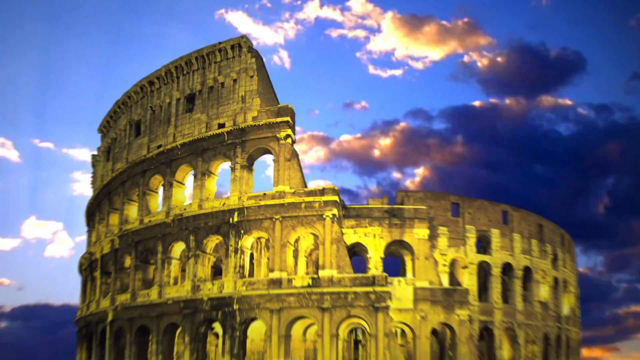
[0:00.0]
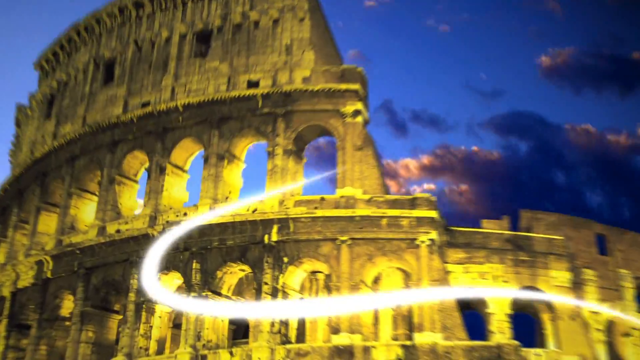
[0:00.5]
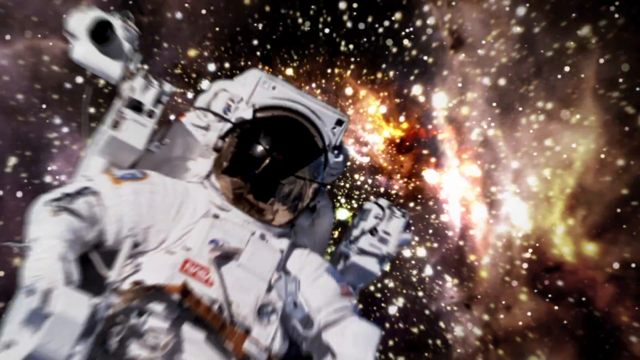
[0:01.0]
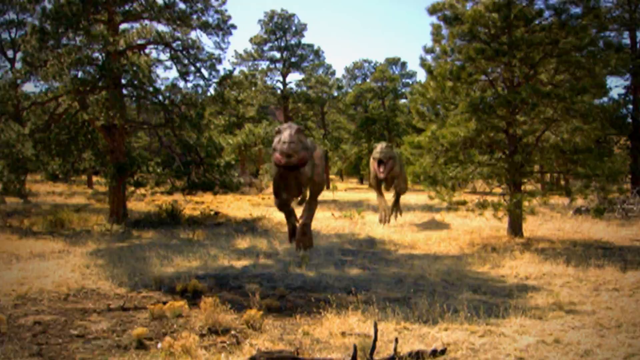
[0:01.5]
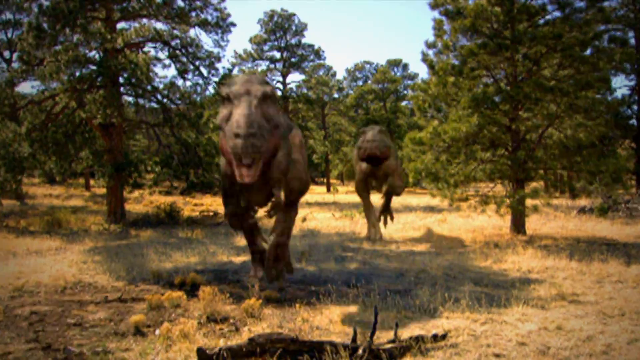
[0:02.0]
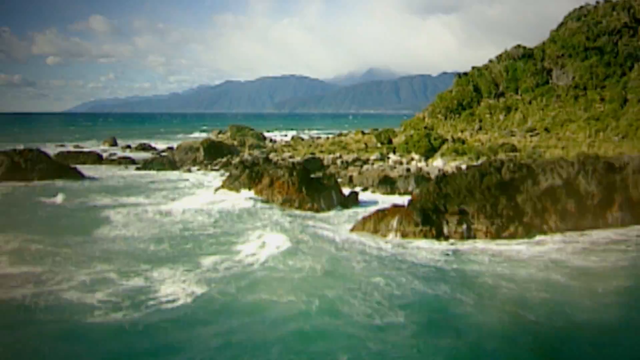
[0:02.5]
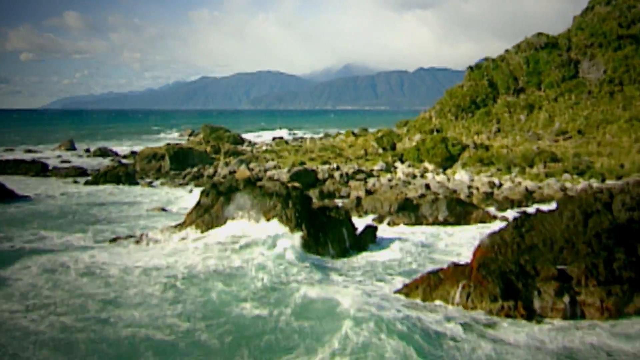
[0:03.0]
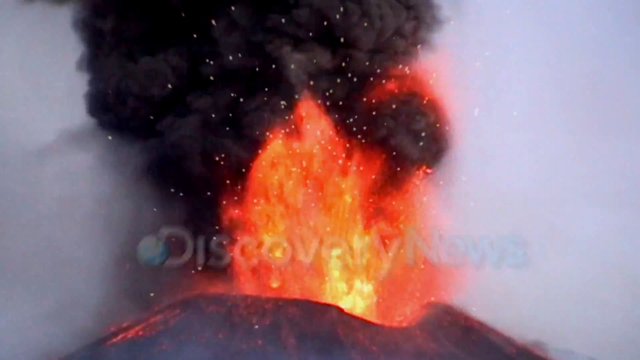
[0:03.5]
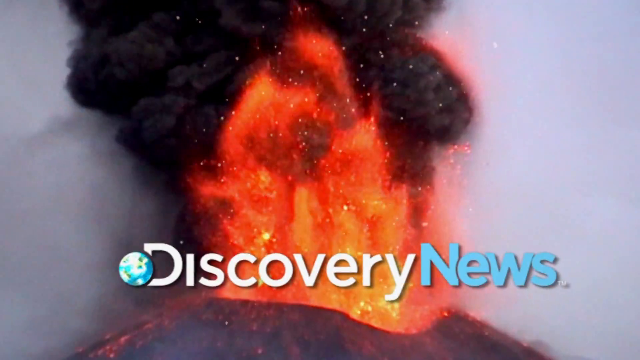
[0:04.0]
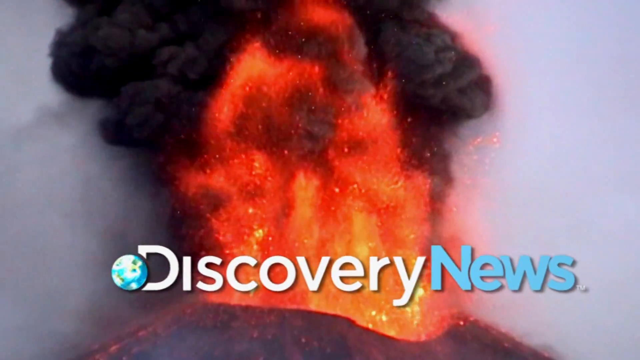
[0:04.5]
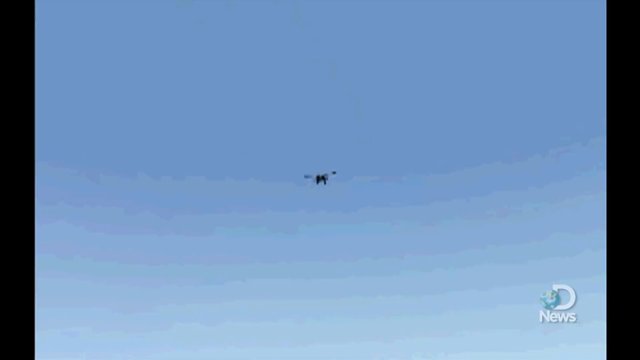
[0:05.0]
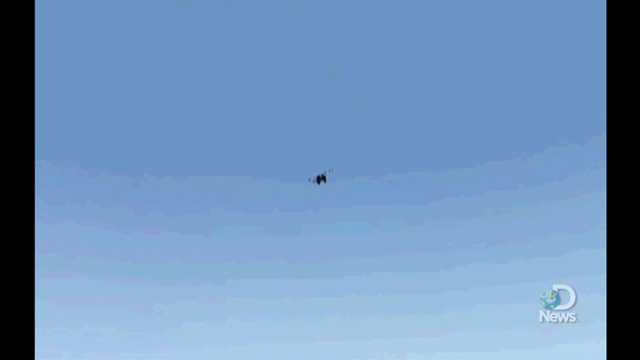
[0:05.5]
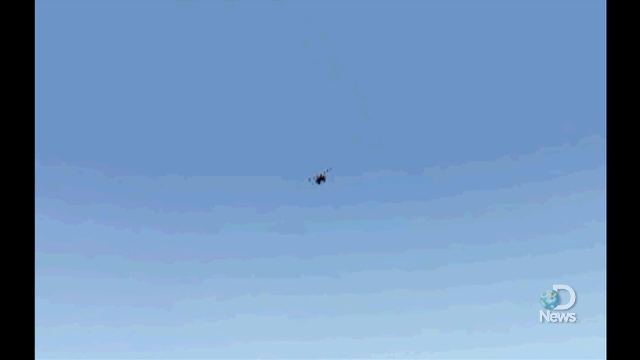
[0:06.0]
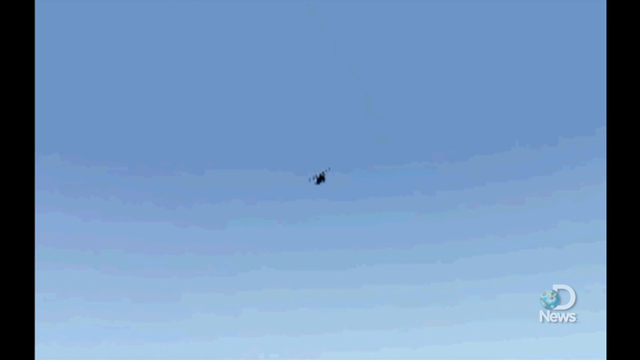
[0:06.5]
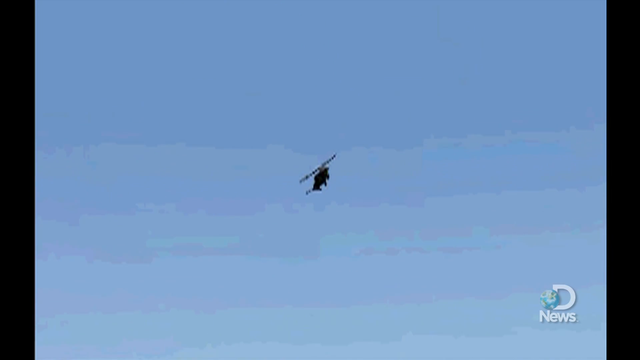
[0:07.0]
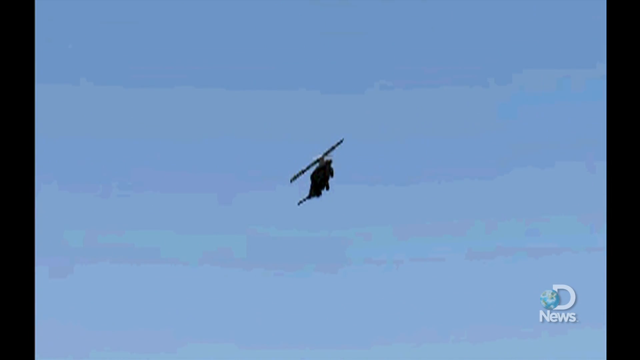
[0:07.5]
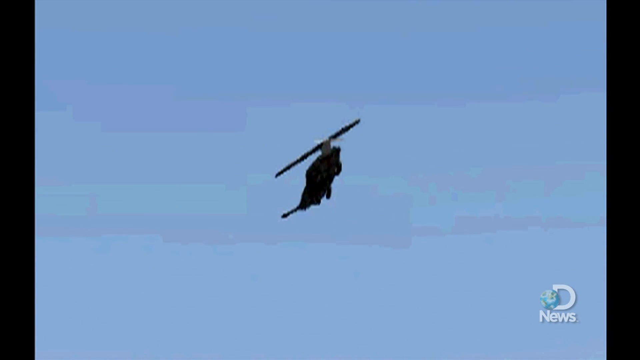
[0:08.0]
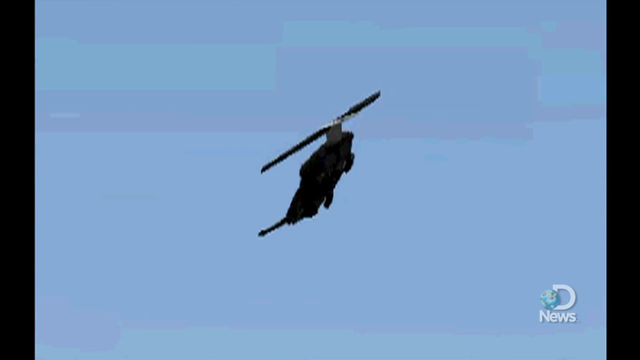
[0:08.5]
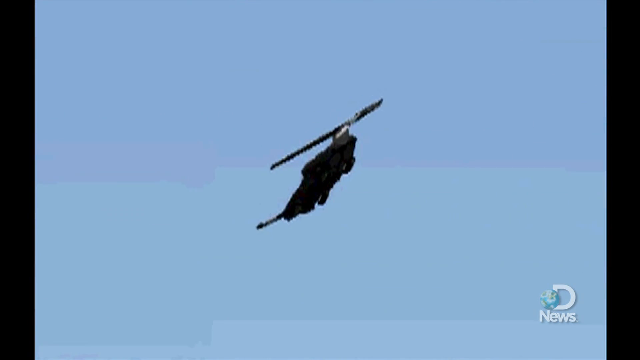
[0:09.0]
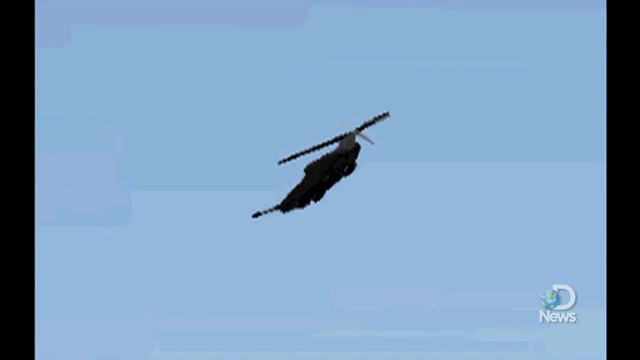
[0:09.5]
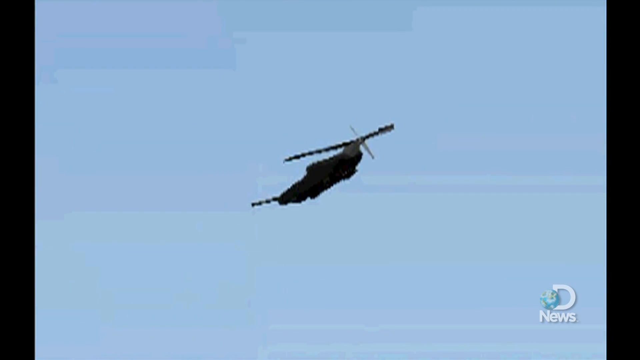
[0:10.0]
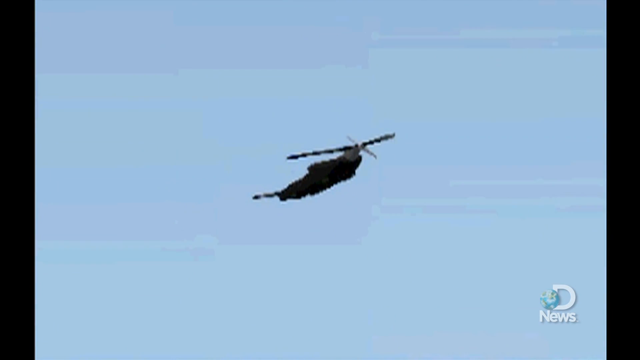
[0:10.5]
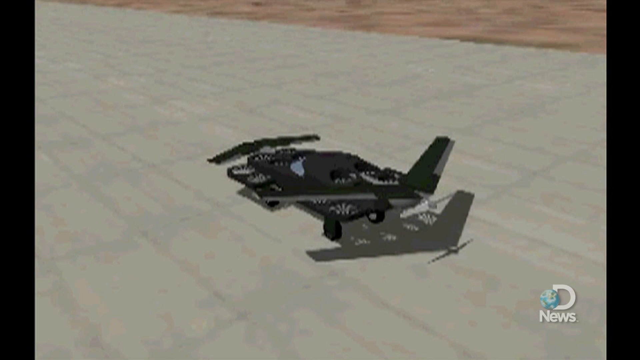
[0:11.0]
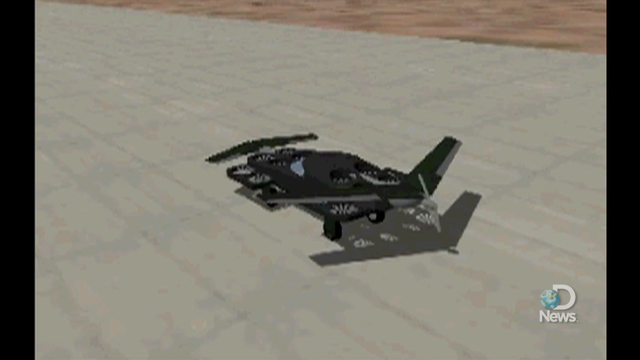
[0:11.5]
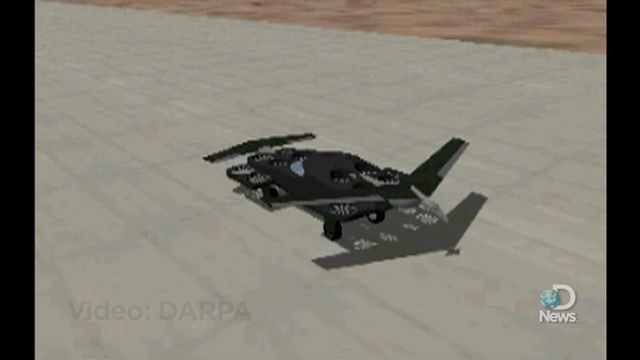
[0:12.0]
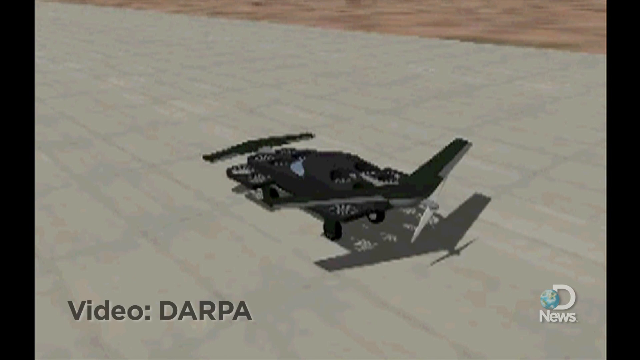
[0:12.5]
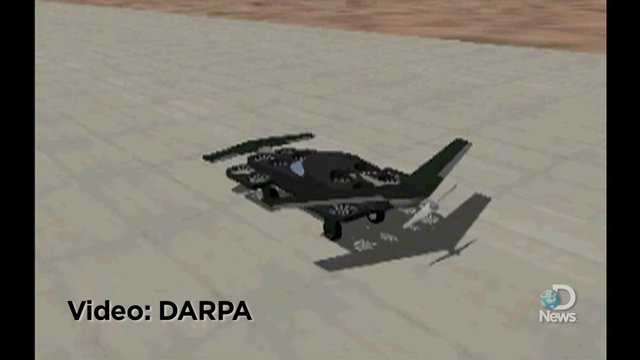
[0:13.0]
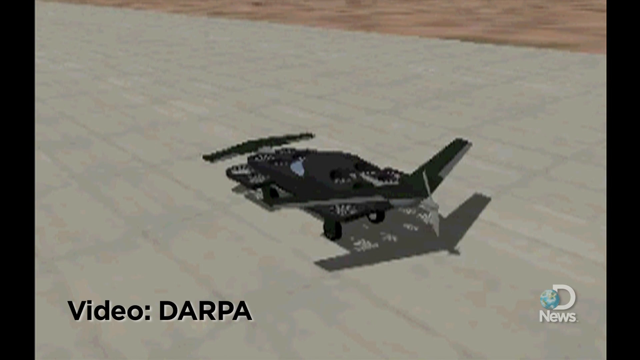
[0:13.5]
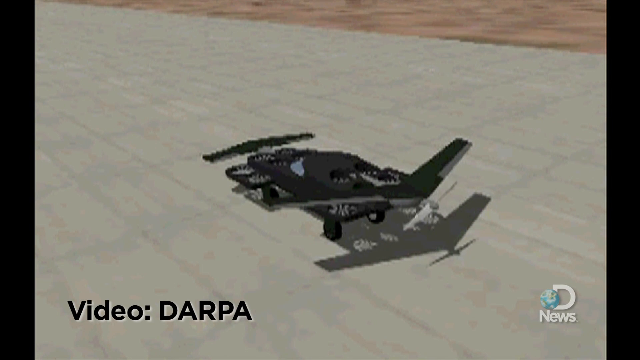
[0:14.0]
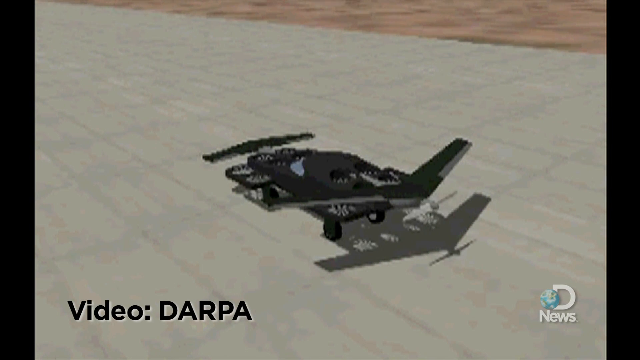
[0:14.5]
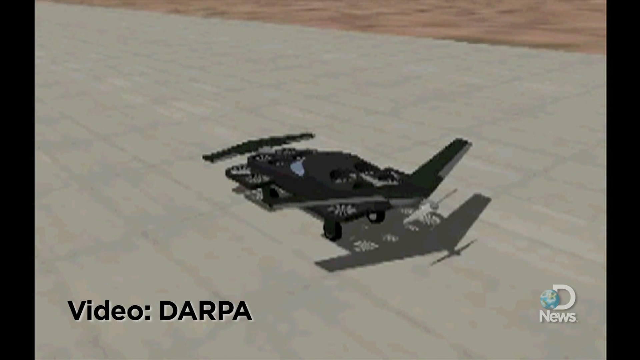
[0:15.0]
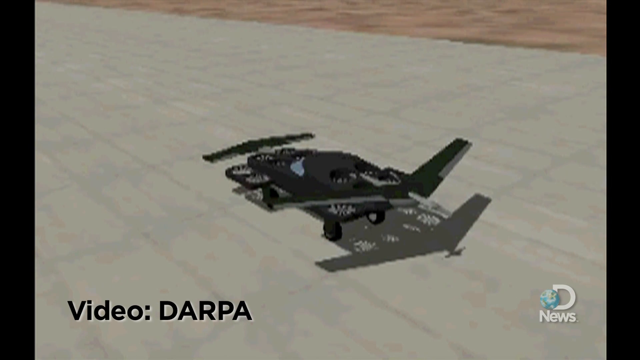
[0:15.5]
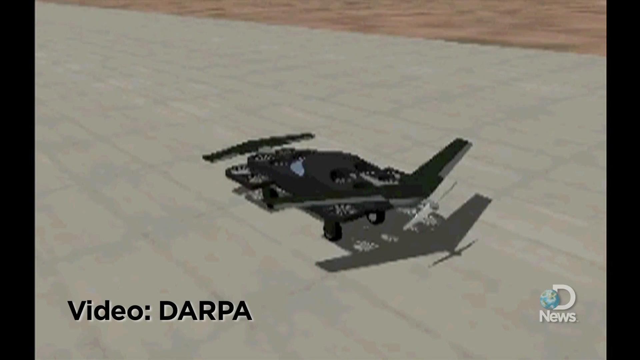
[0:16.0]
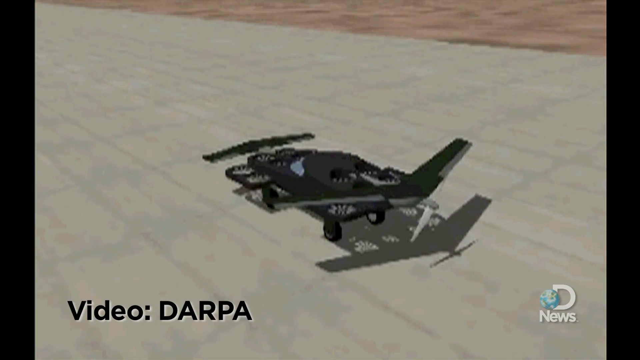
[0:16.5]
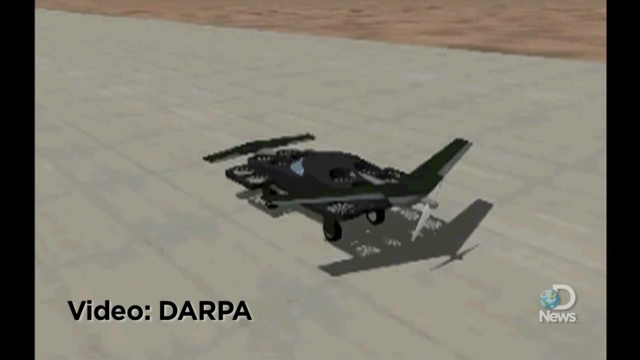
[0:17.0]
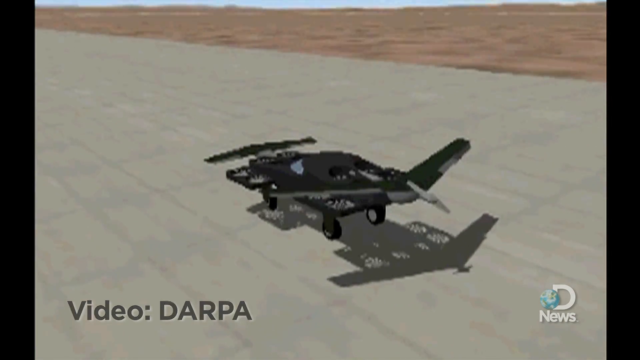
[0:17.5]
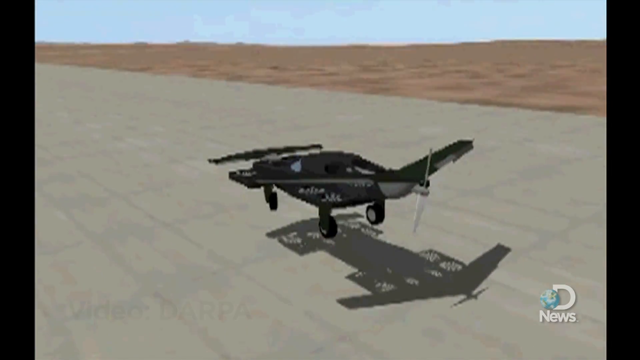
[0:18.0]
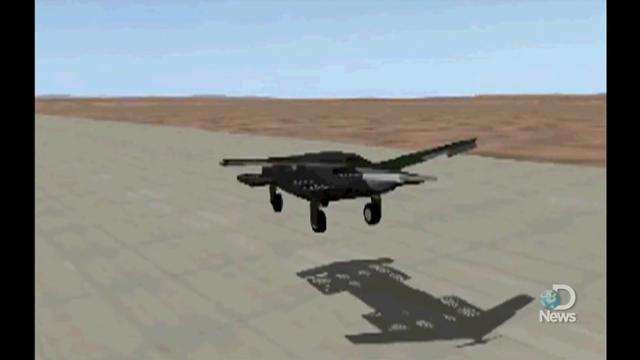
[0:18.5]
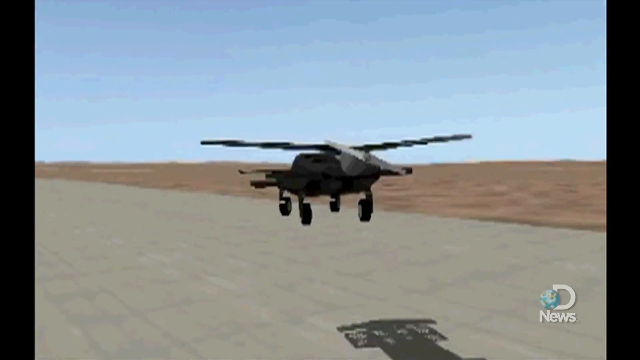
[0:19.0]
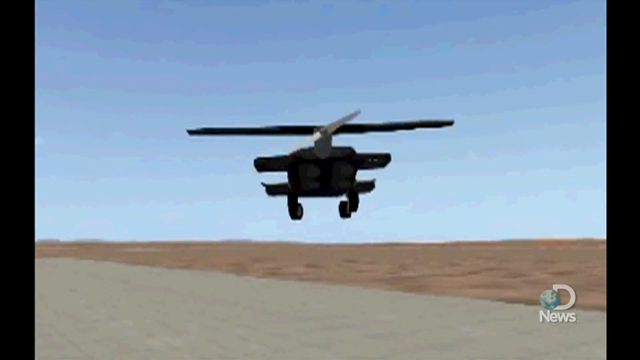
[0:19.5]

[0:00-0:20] The video opens with what looks like an animation of the Colosseum against a blue sky, and a squirrelly white light passes through it. Next, an astronaut looks toward the viewer with space in the background. Two Tyrannosaurus rex run toward the viewer through a lot of trees. What looks like an aerial view shows waves crashing onto rocks on the right side, followed by what appears to be a volcano with lava shooting out of it and black smoke above it. White text at the bottom reads "Discovery News." The video then transitions to what looks like a blue sky and appears to zoom in on an animated airplane flying through the sky. The view changes, and the airplane is now on a runway, facing away from the viewer and to the left. It has a propeller at the back and upward-facing propellers, six in the front and apparently four in the back, all spinning. It is a very crude 3D animation with a shadow behind the plane. The plane suddenly takes off vertically, turns around clockwise so its back and propeller are visible, and rises vertically. Everything is animated in what looks like a very crude, pixely 3D style.